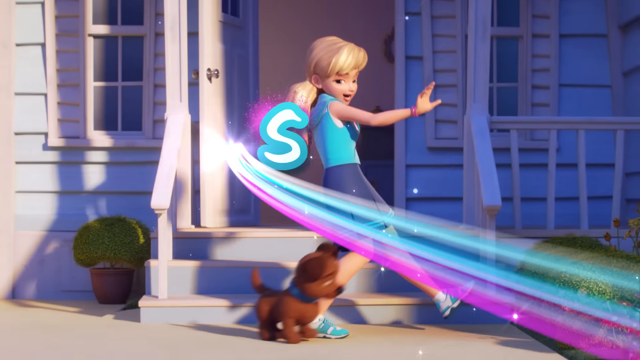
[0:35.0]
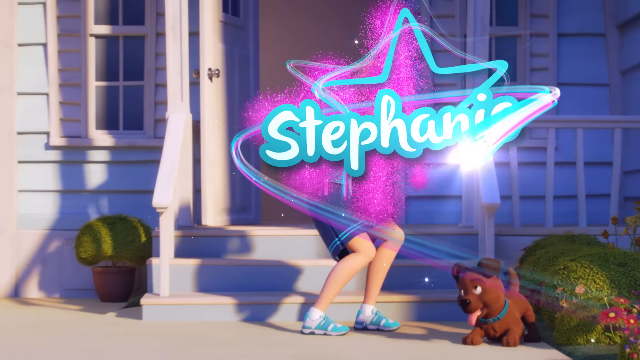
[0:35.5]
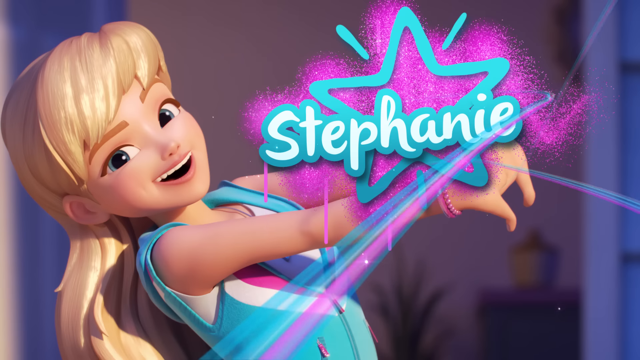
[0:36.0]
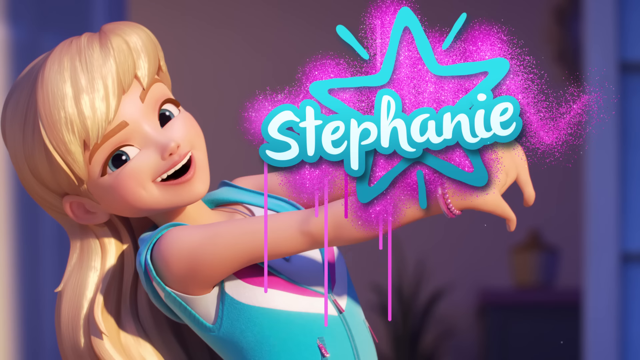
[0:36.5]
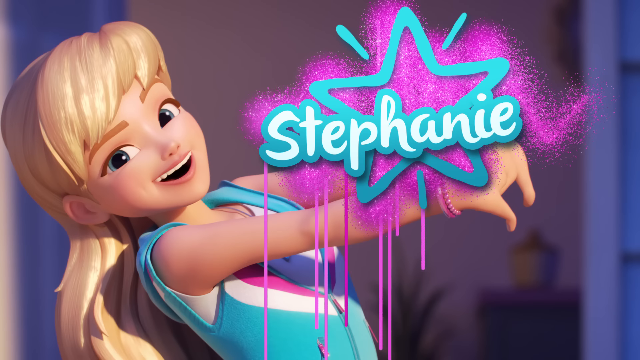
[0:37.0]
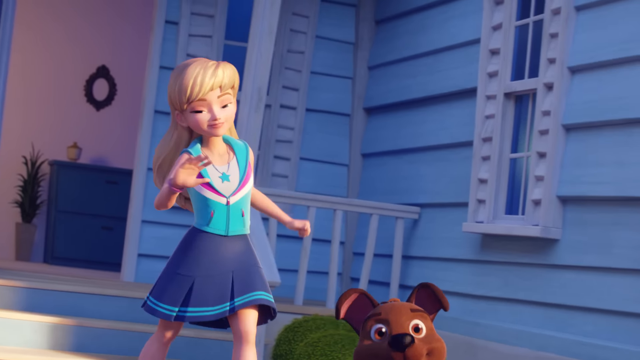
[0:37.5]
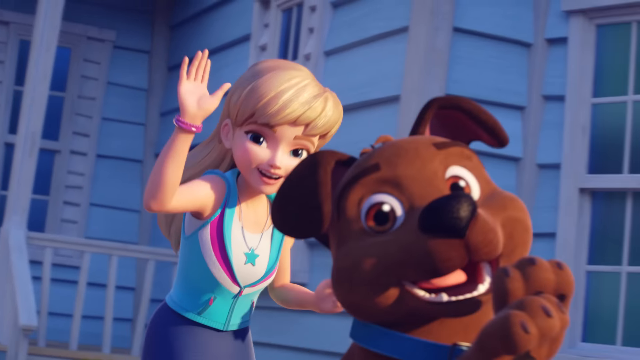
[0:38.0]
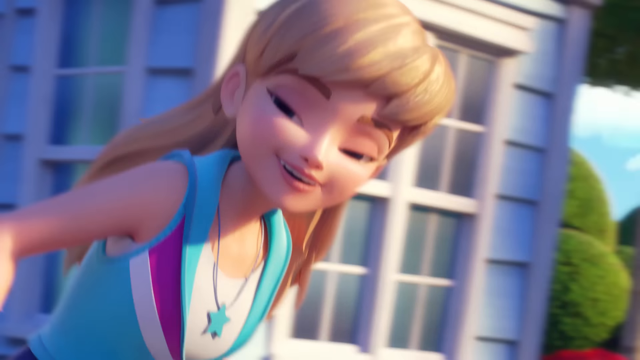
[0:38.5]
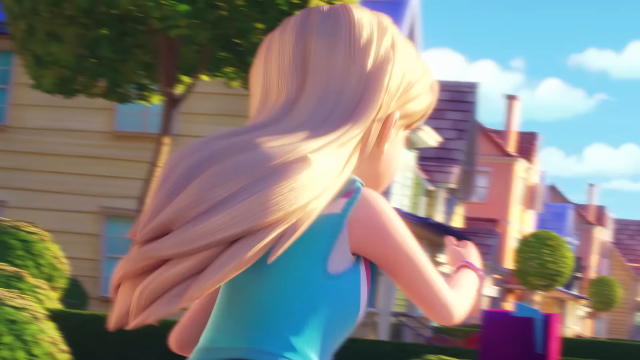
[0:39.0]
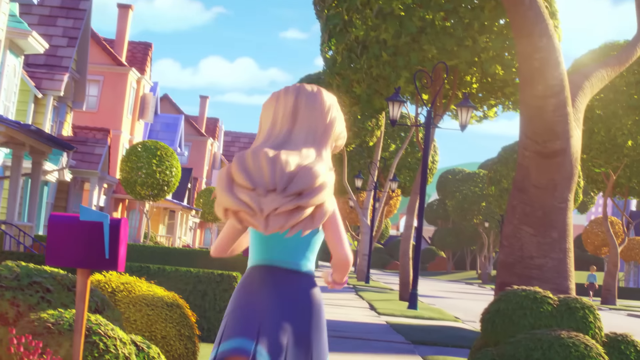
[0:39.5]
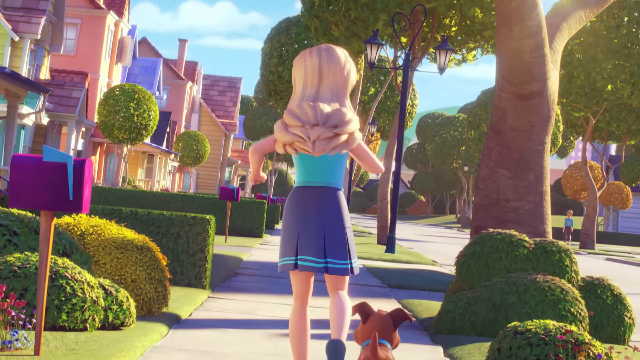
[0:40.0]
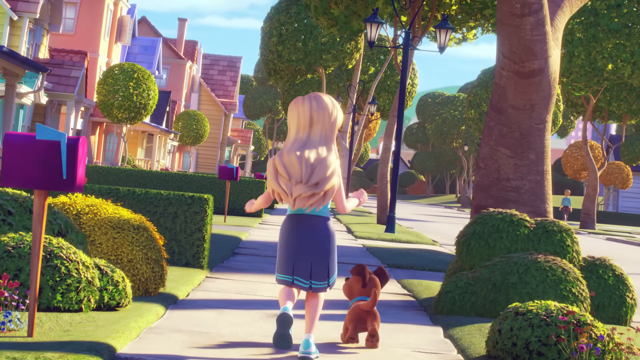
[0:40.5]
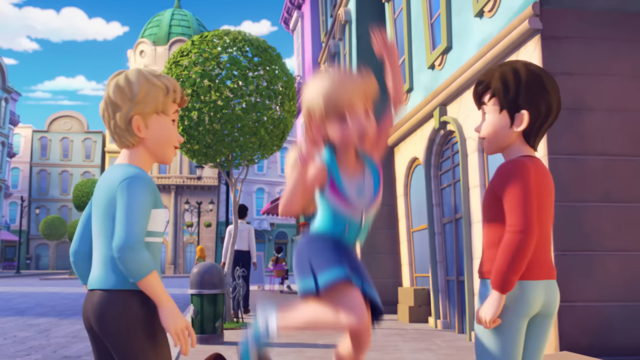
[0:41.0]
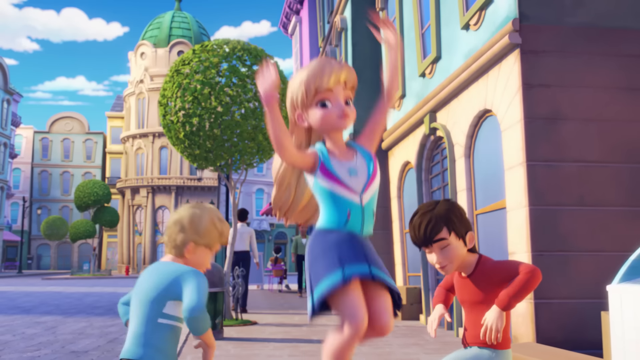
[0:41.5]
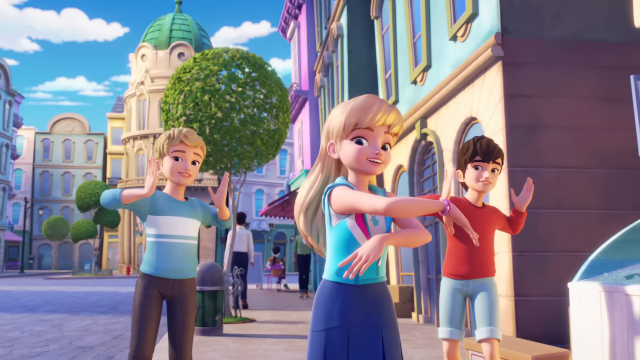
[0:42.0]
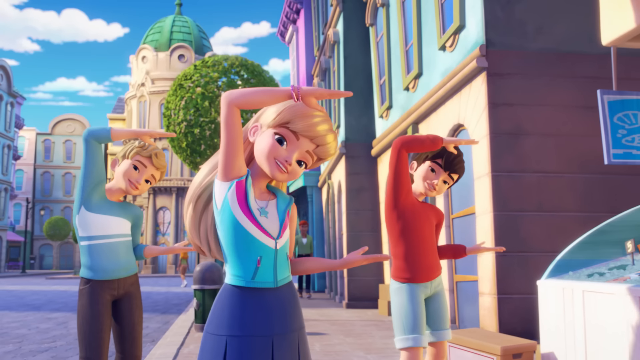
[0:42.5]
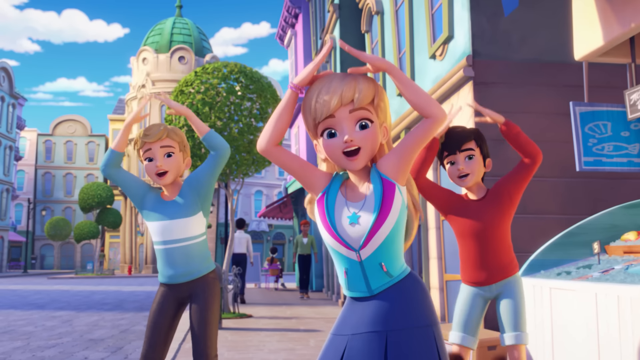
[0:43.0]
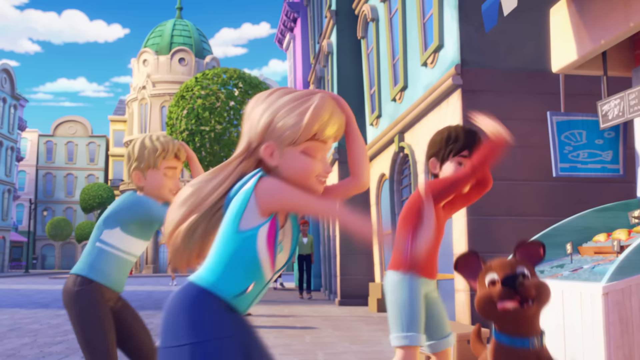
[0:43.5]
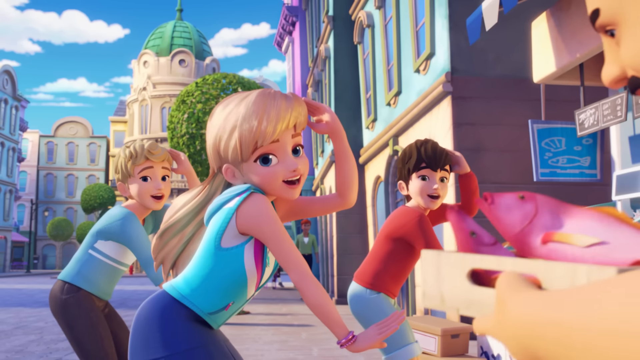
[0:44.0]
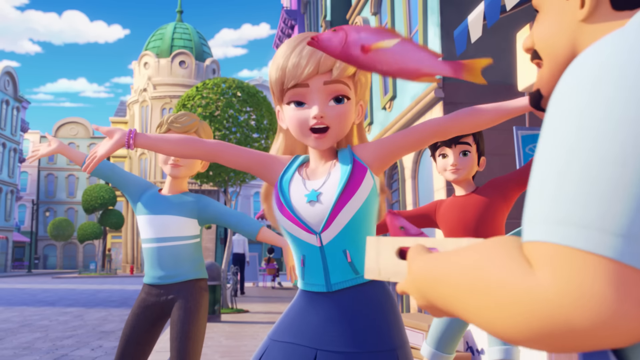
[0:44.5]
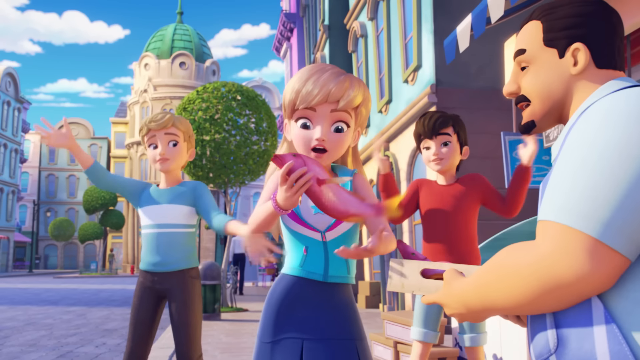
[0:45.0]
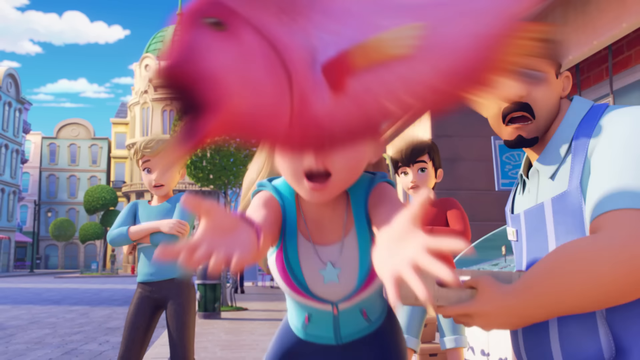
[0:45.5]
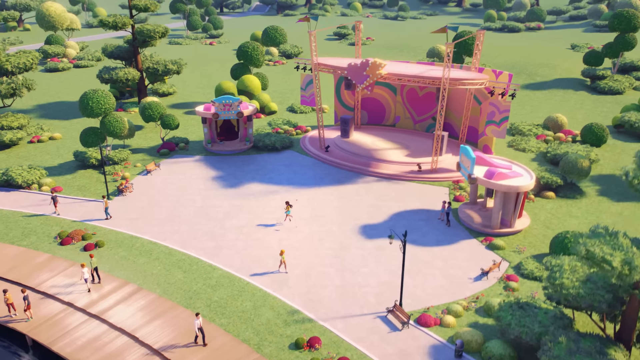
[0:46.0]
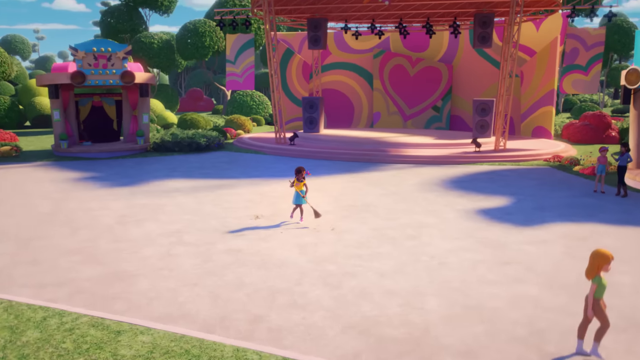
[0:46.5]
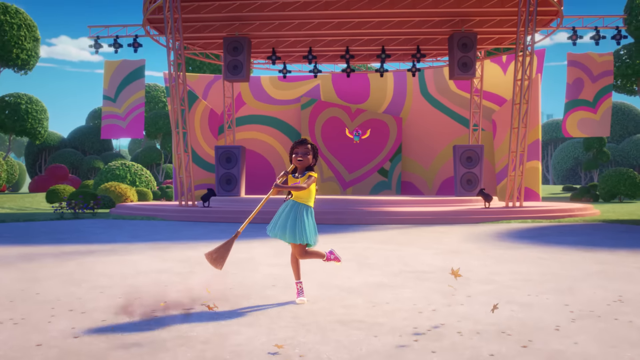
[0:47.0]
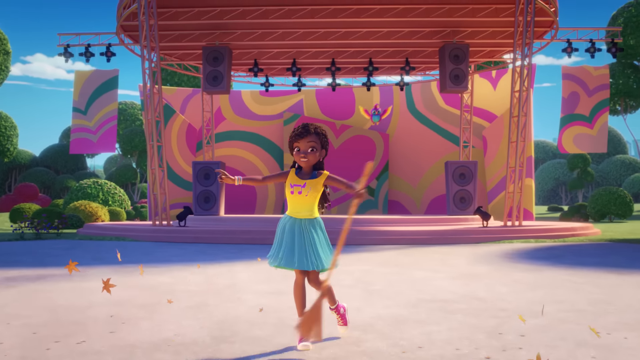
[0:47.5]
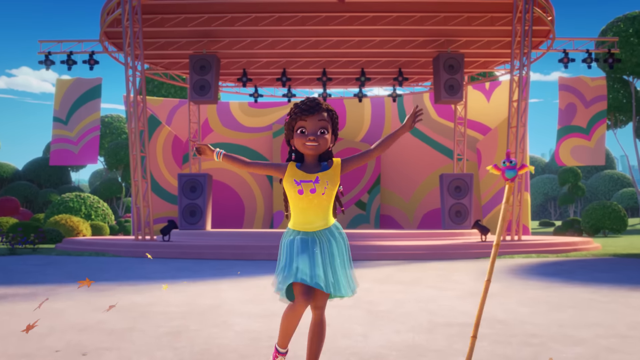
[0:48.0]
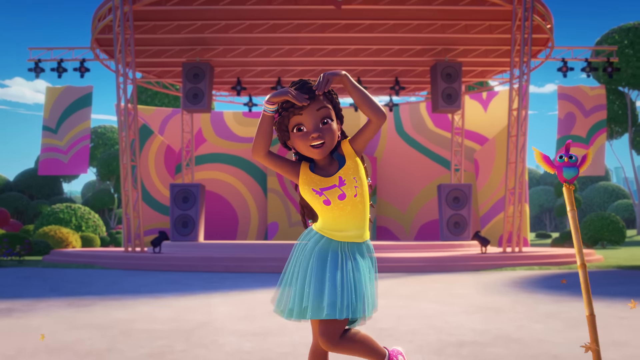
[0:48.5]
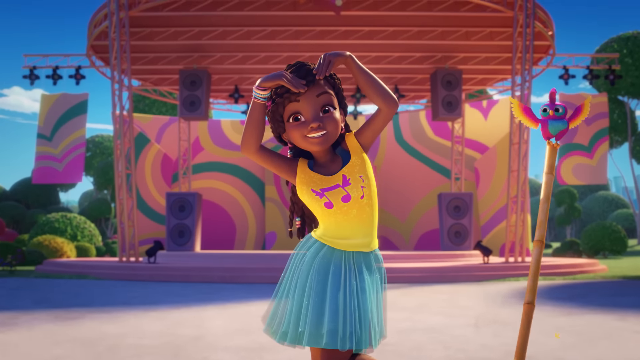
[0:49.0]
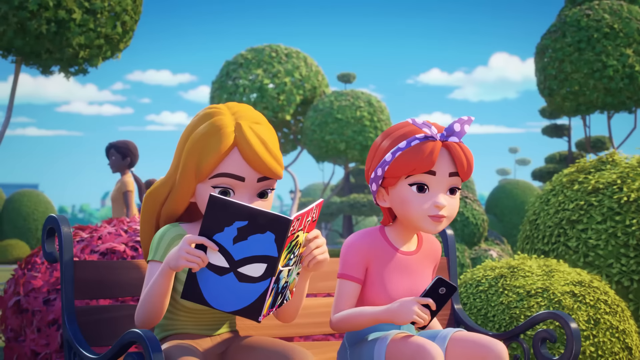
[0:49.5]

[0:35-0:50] The friend jumps out of the house with the dog, and her name is shown as Stephanie. It looks warm and sunny. She walks down the street, and people she passes break into song and dance with her. A live fish falls off a man's tray and Stephanie catches it before it hits the ground. Another friend is then seen sweeping, and the scene cuts off where maybe two people recognize her.